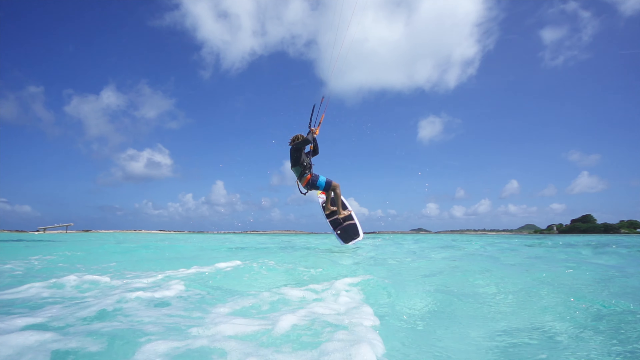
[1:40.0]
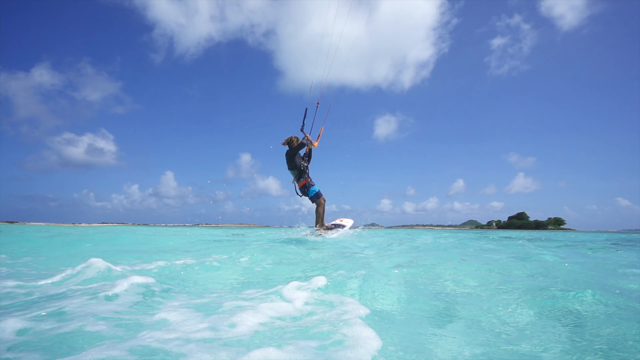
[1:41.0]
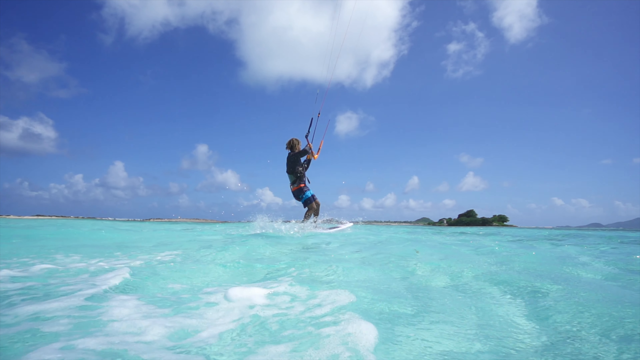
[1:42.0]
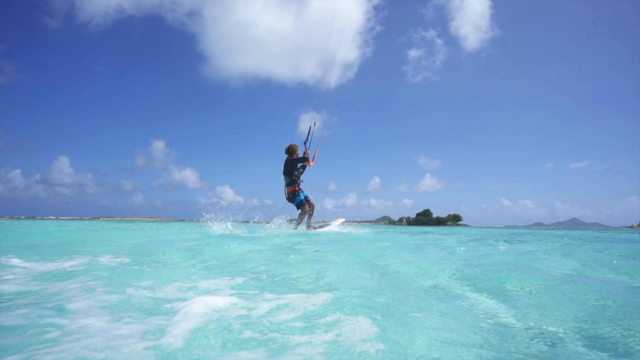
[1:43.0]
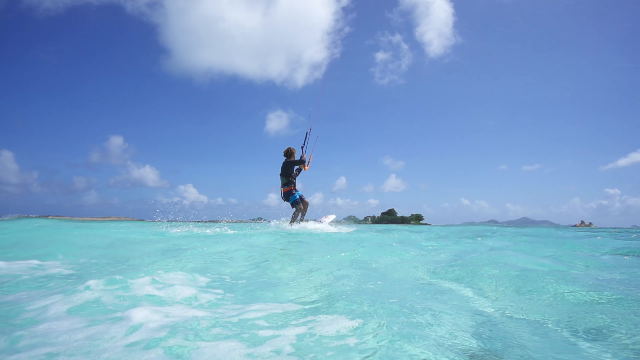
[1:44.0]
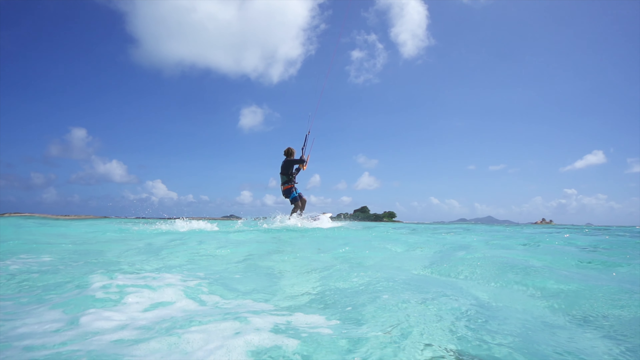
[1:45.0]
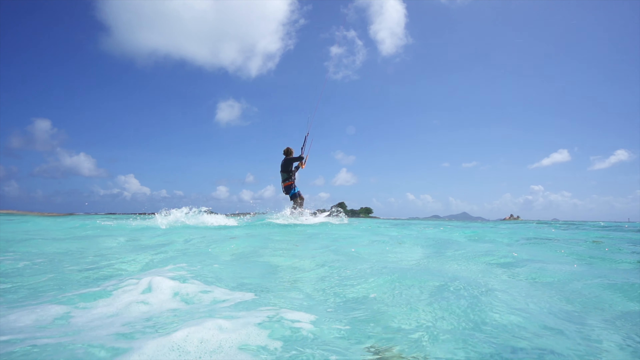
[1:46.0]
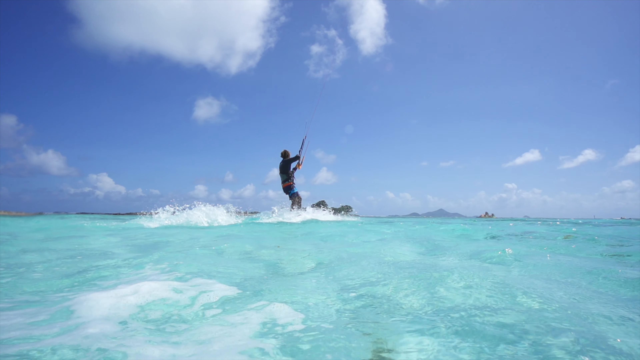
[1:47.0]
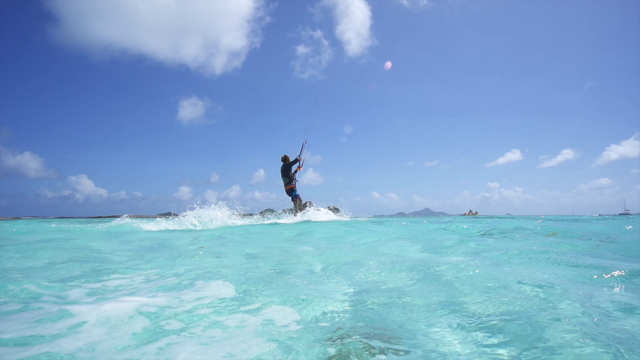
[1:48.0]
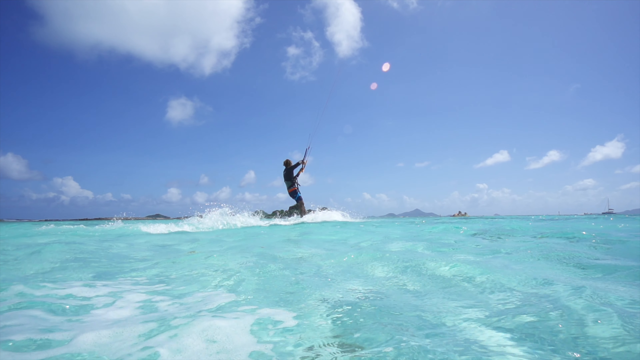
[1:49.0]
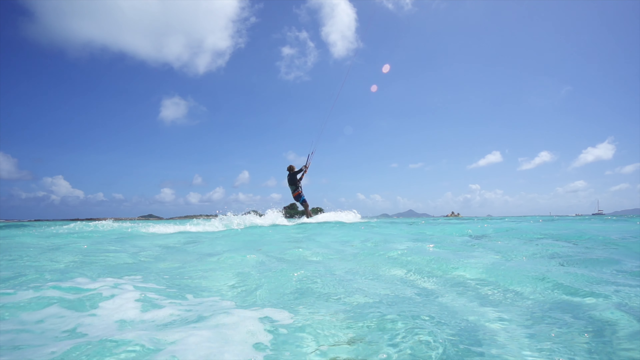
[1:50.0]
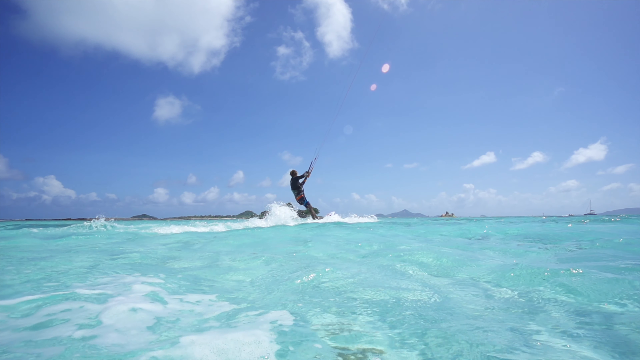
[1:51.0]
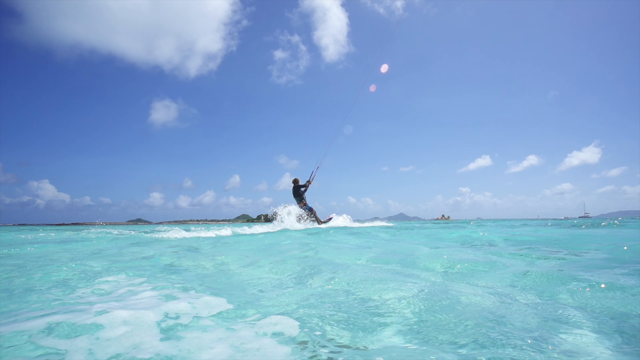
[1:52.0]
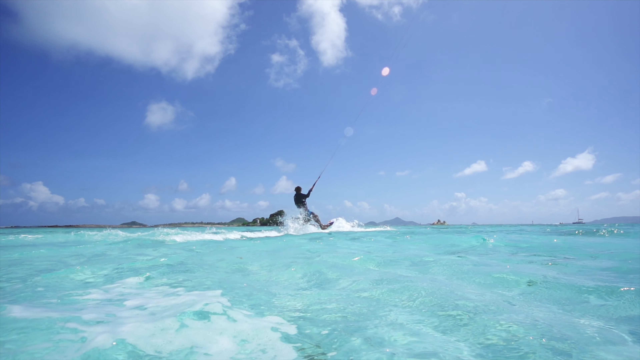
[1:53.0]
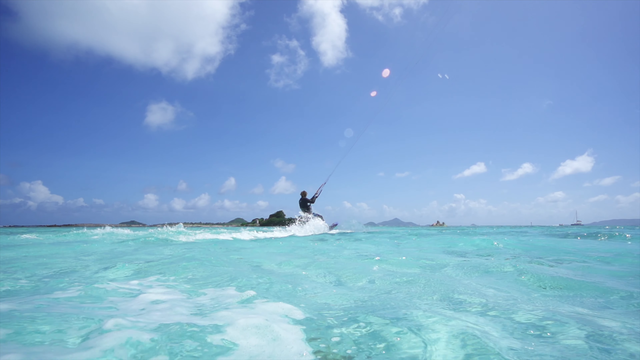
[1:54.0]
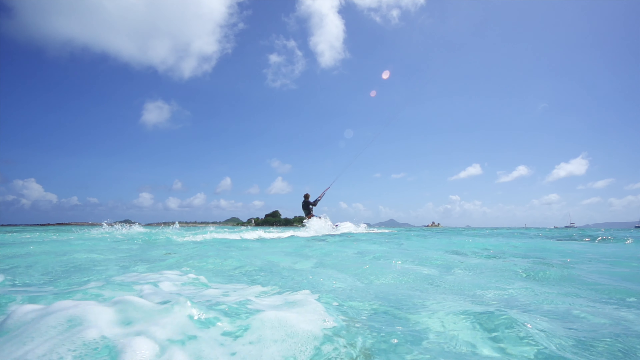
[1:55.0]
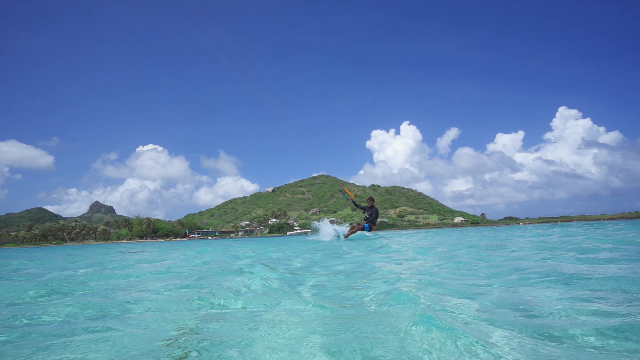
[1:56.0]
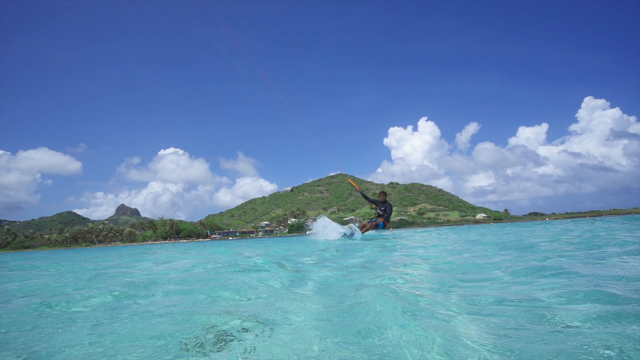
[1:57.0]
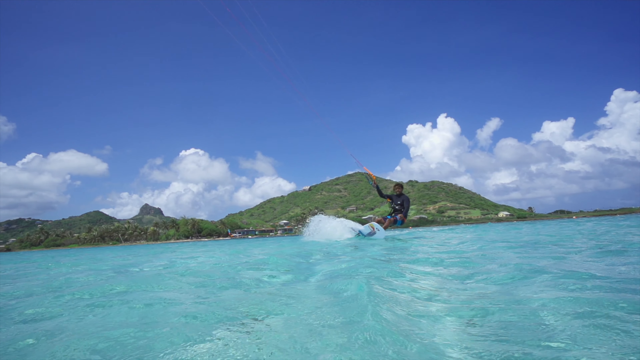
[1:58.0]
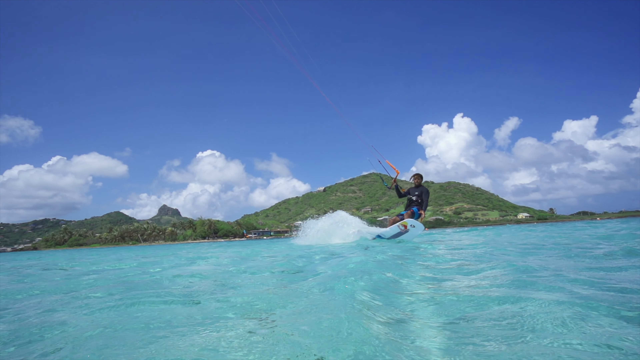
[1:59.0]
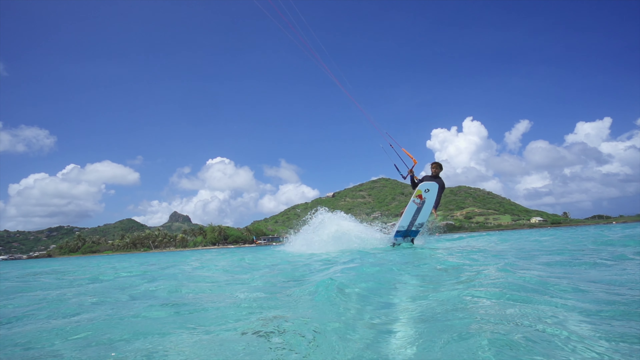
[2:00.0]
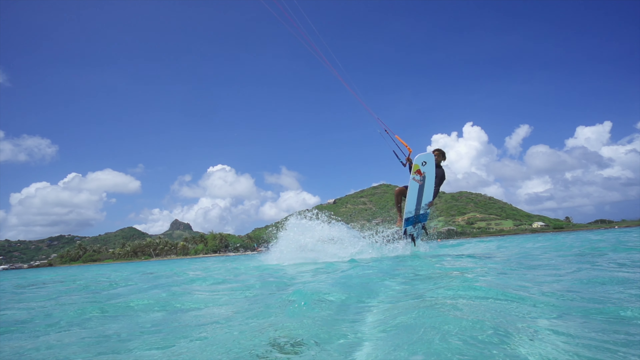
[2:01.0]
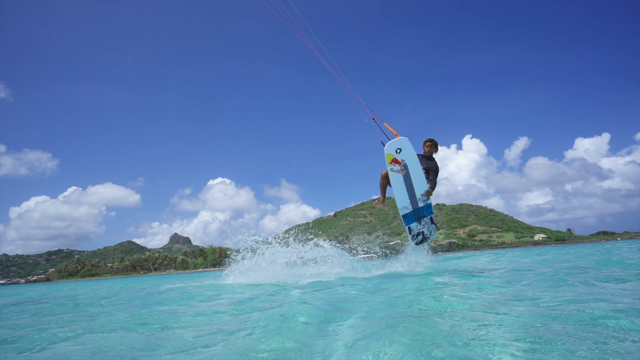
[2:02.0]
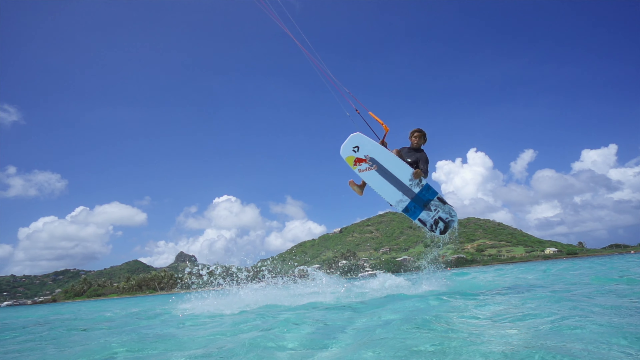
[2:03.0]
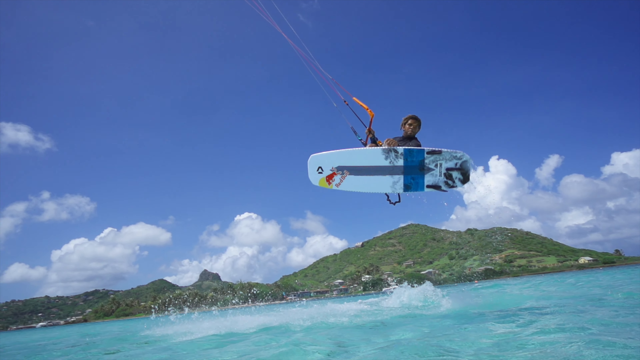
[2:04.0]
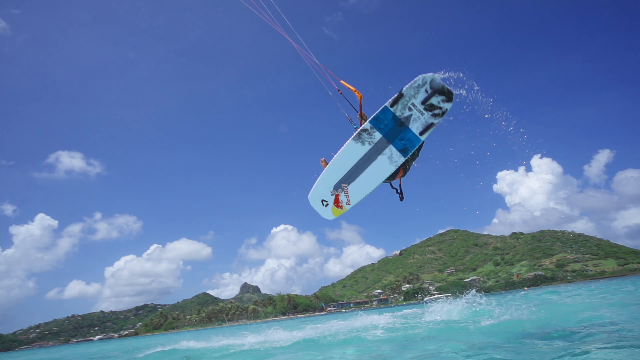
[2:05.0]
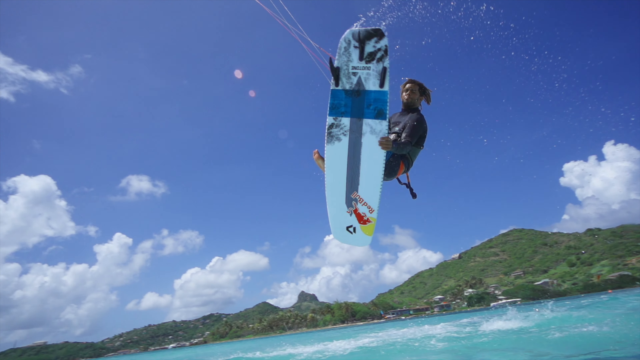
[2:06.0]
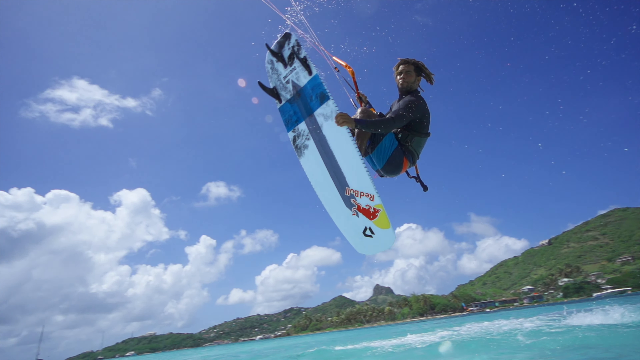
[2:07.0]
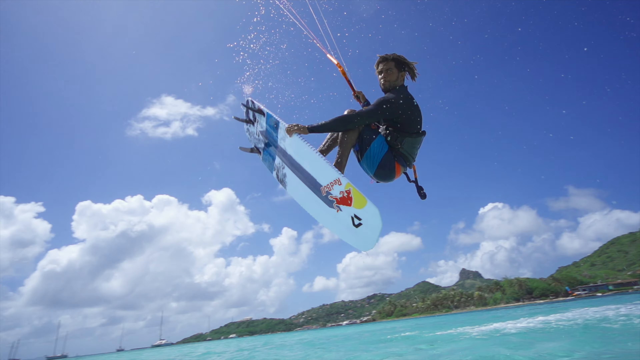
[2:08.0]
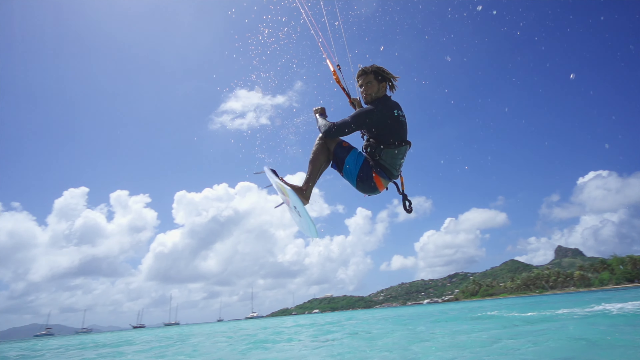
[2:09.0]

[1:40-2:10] The water is bluish-green, and the blue sky has white puffy clouds. The man is on the board, which faces away from the screen, and he moves away so that his back is seen as he gets further and further away. The angle then changes to face him from the front, with the mountainous area behind him. He lifts up into the air holding the board with one hand, turns the board in a complete circle, and puts his feet back on the board sideways. The top of the board has a black cushioning area. He then puts two hands on the board while still in the air, and lands in the water. He is now facing away from the camera and going further into the distance as the waves move upward.